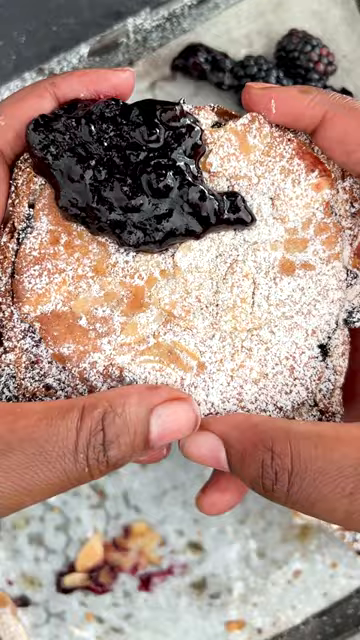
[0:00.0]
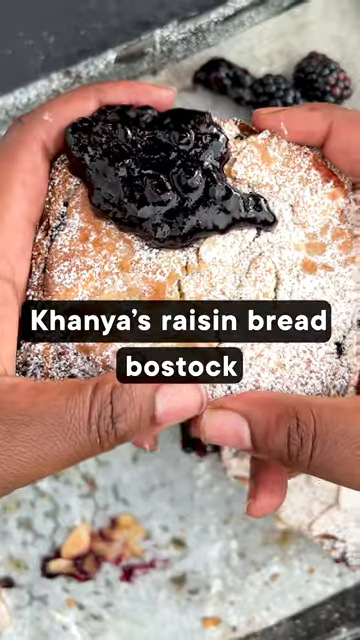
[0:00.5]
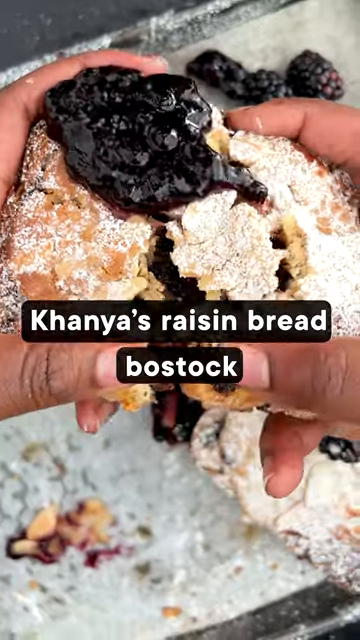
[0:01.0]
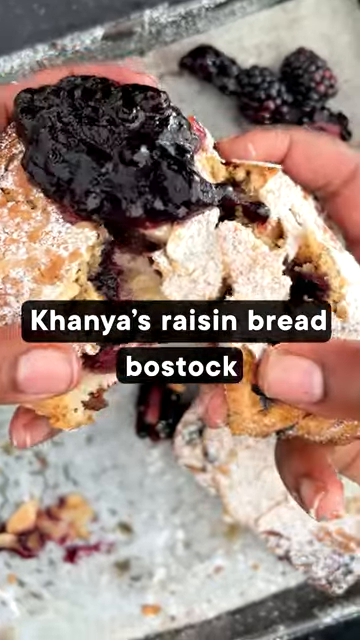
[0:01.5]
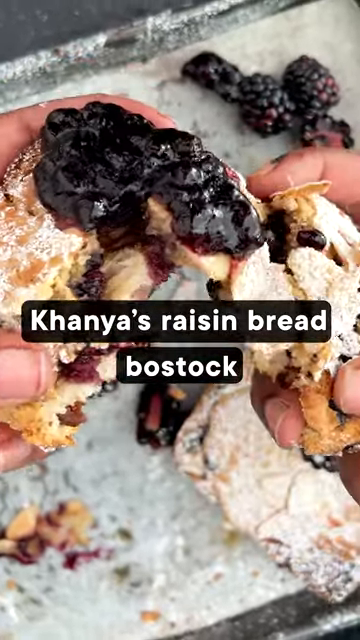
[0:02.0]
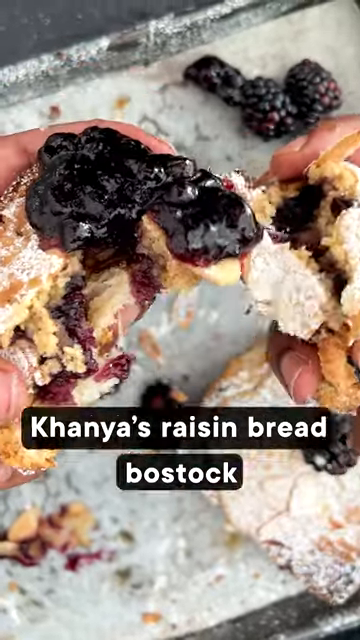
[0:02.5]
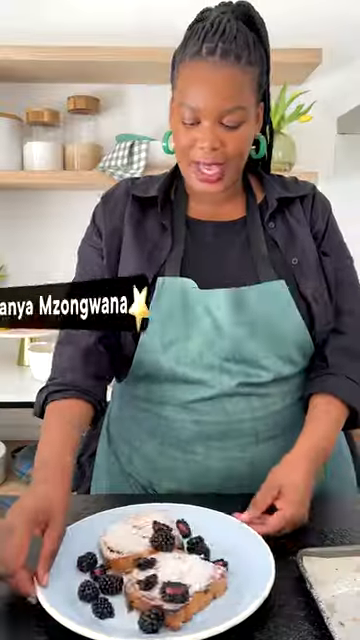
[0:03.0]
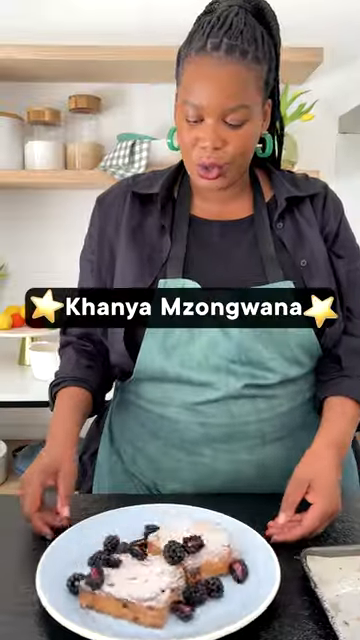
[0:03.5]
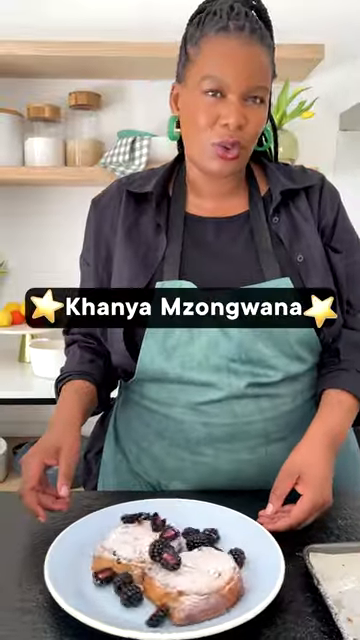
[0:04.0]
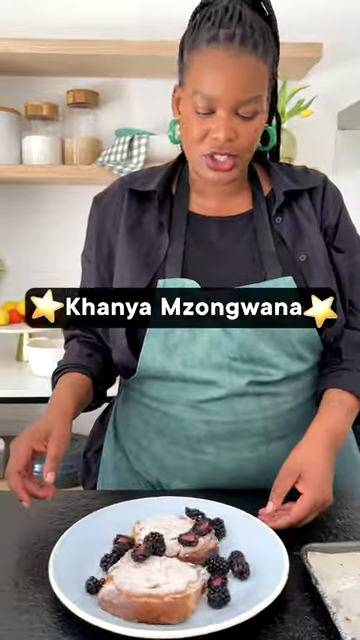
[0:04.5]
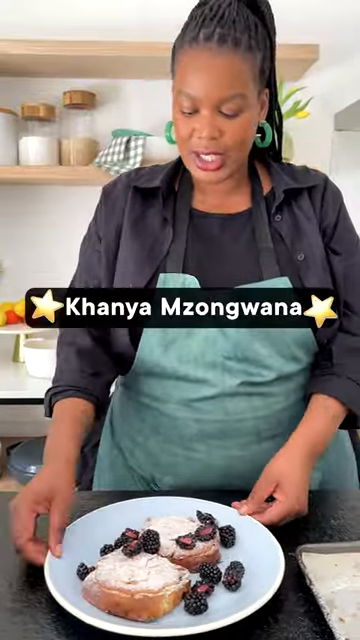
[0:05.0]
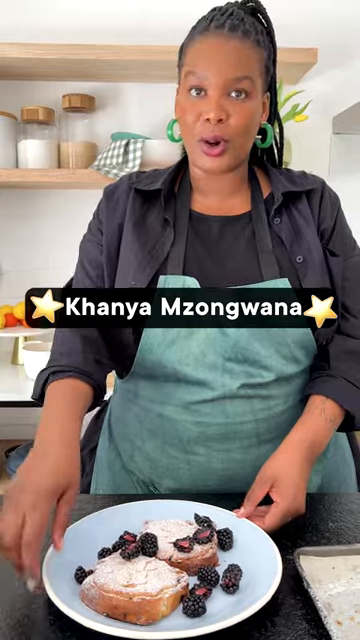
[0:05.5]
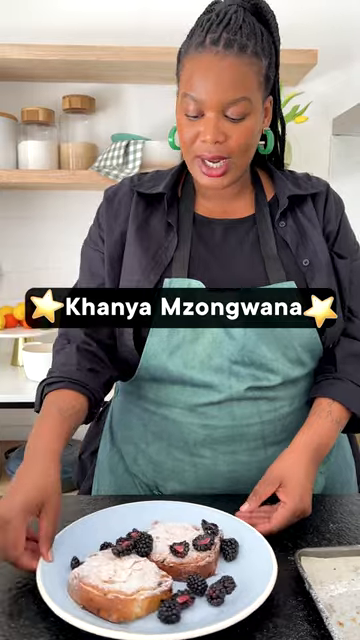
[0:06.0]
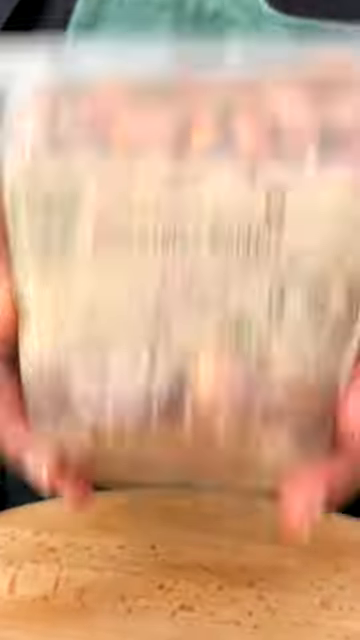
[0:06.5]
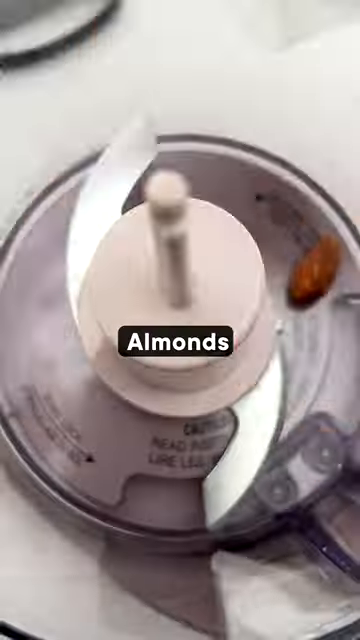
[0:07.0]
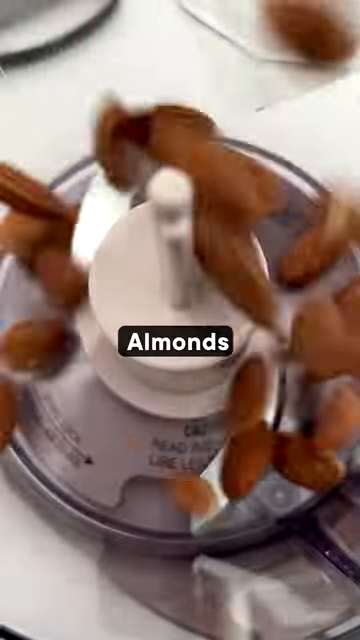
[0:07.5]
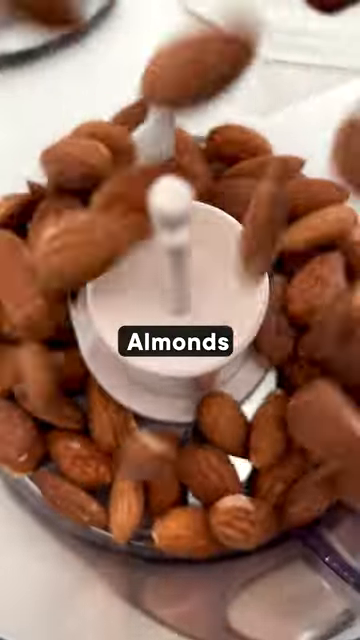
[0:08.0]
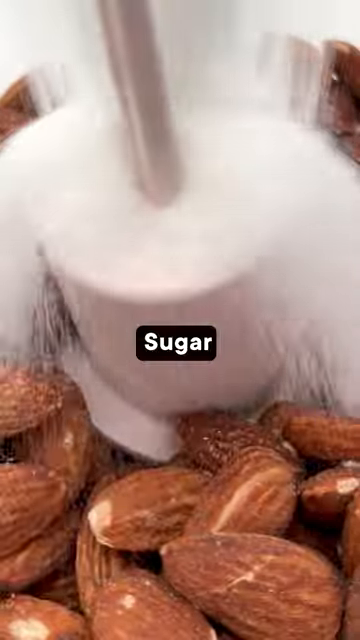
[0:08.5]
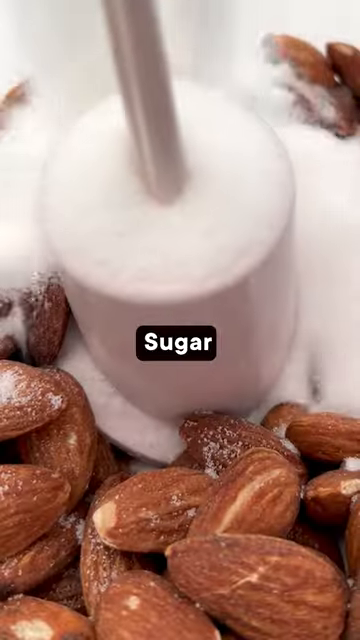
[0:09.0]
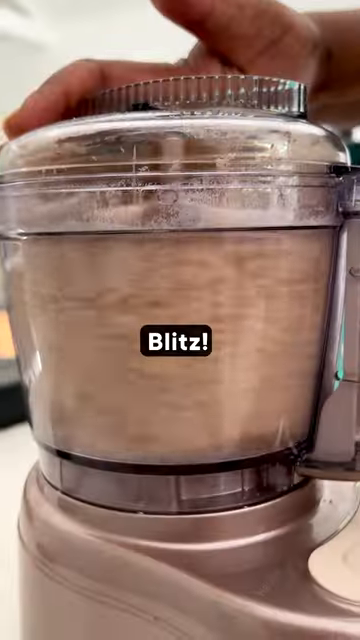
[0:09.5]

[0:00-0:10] This appears to be a TikTok or some other type of vertical video of what looks like a recipe being made; judging by the portrait view, it seems to have been filmed on or made for an iPhone. At the beginning, the video shows the dish that is going to be made, Khanya's raisin bread bostock, Khanya seemingly being the name of the woman making it. Up close, she breaks up the raisin bread with her hands, with jelly on top. In the next scene she talks, probably about what she will be cooking, and her name appears on screen as "Khanya Mzongwana", with various stars around the sides of the name. She spins the dish around as she talks about it, then begins adding ingredients, which are shown in a quick format as they all go into a blender.